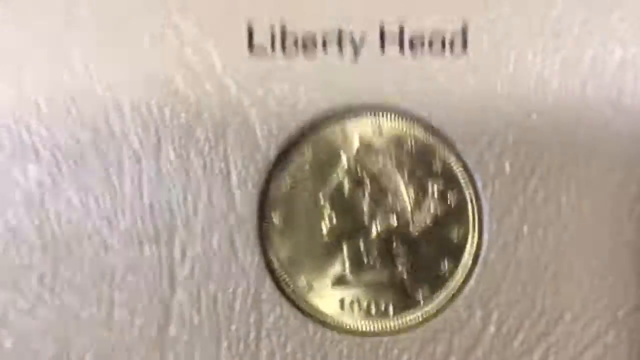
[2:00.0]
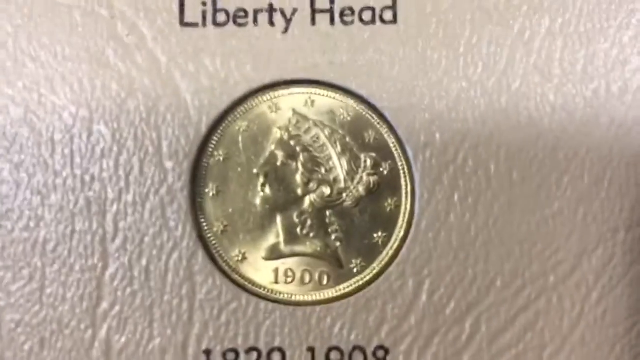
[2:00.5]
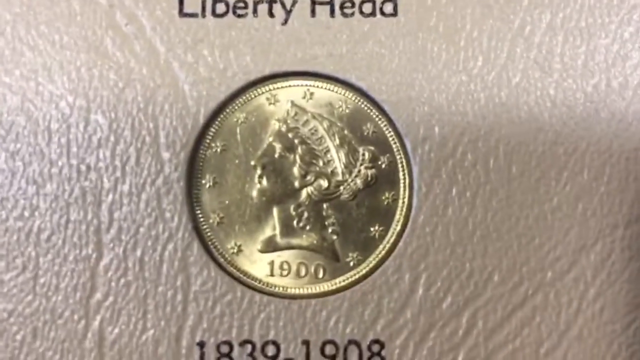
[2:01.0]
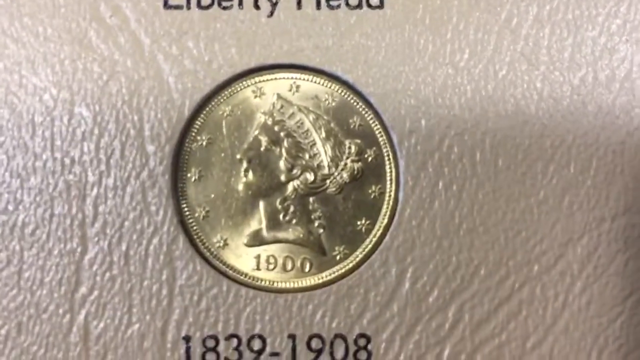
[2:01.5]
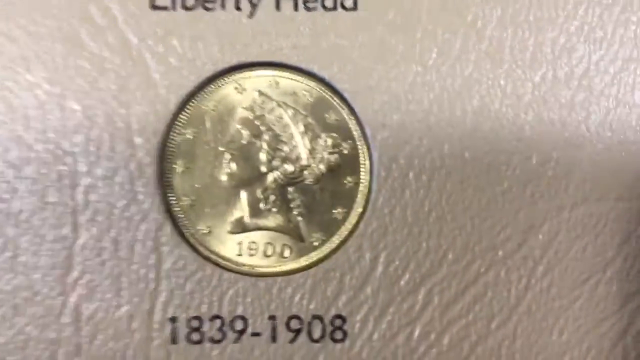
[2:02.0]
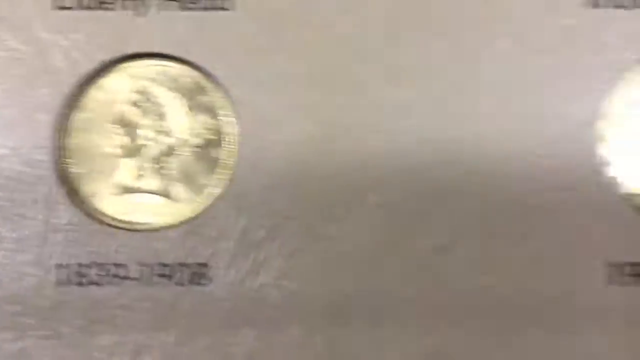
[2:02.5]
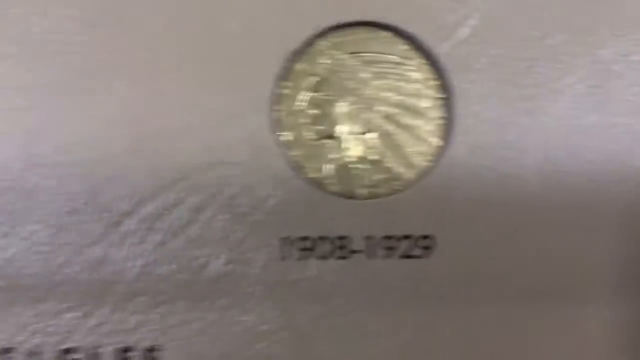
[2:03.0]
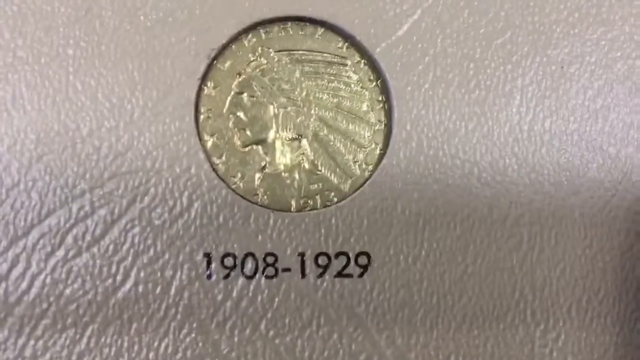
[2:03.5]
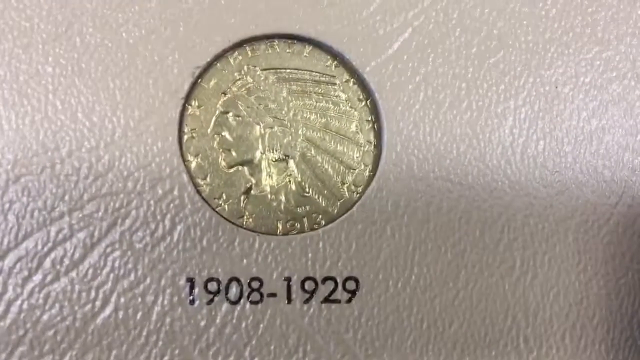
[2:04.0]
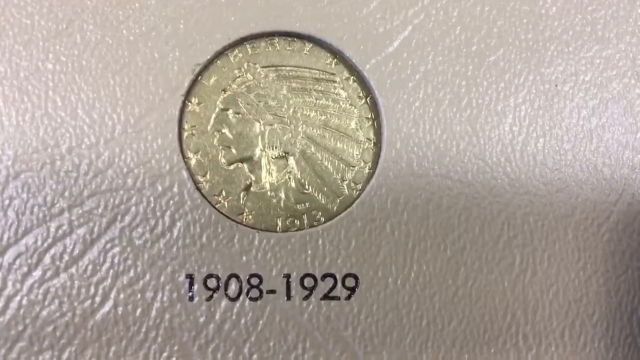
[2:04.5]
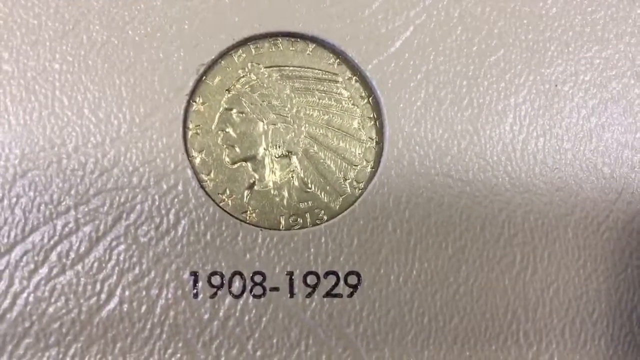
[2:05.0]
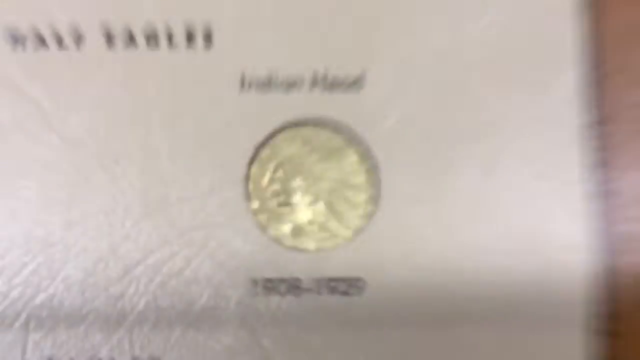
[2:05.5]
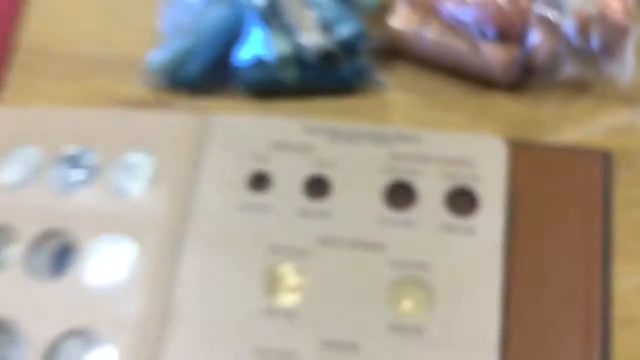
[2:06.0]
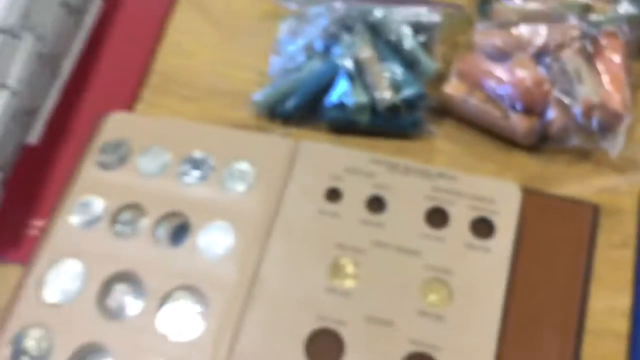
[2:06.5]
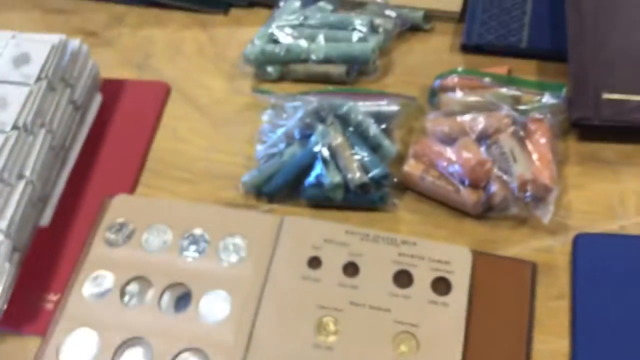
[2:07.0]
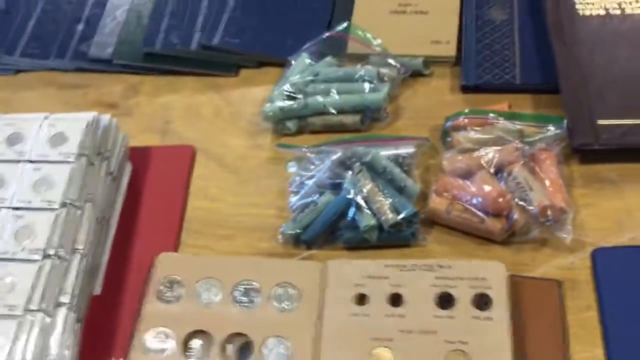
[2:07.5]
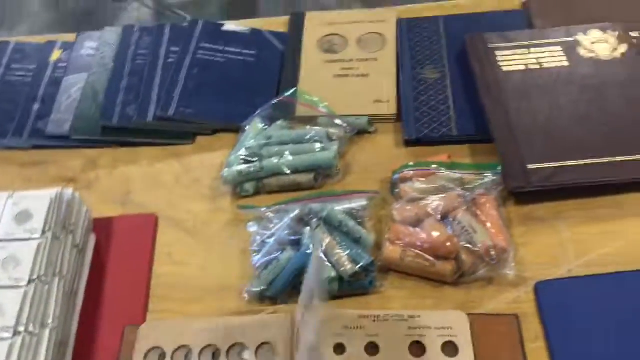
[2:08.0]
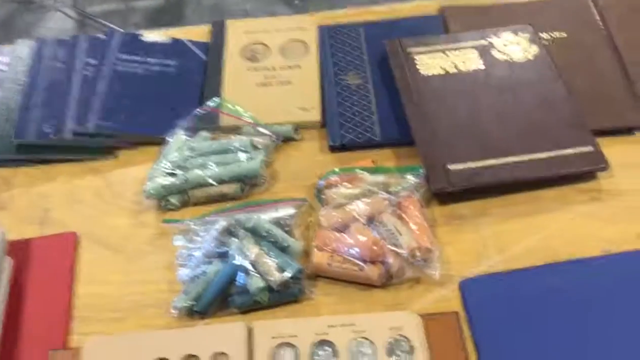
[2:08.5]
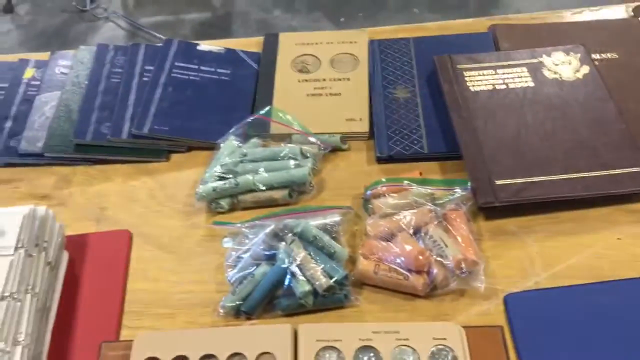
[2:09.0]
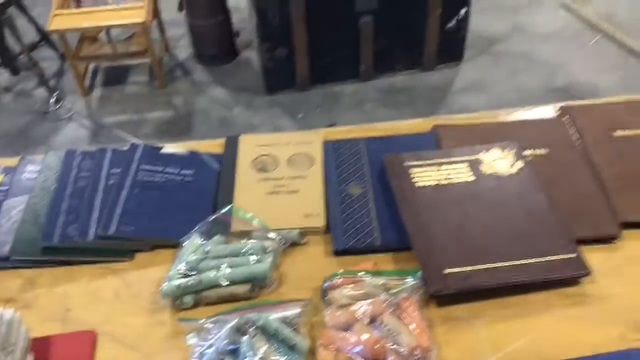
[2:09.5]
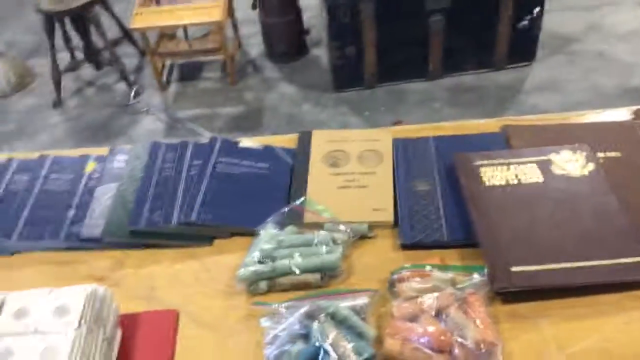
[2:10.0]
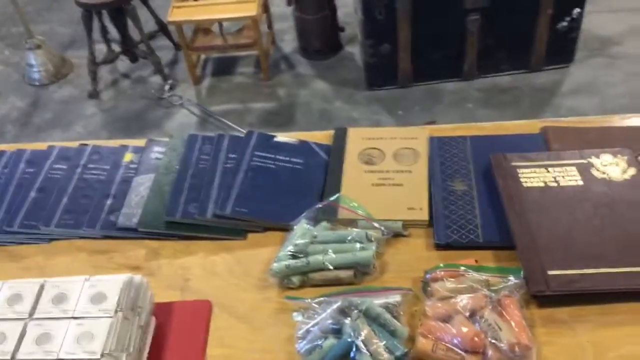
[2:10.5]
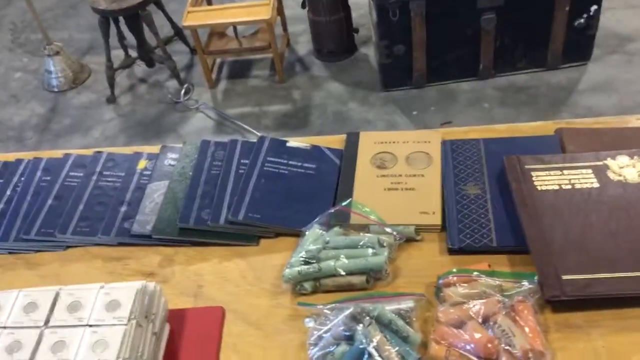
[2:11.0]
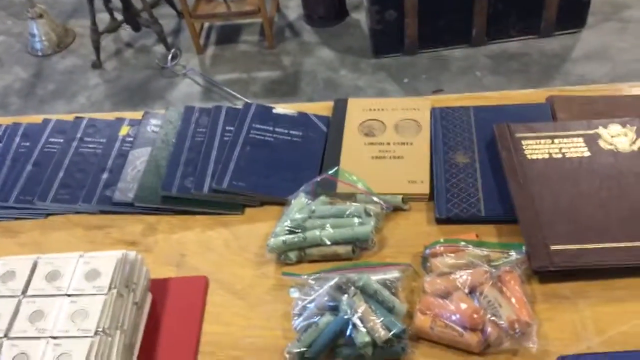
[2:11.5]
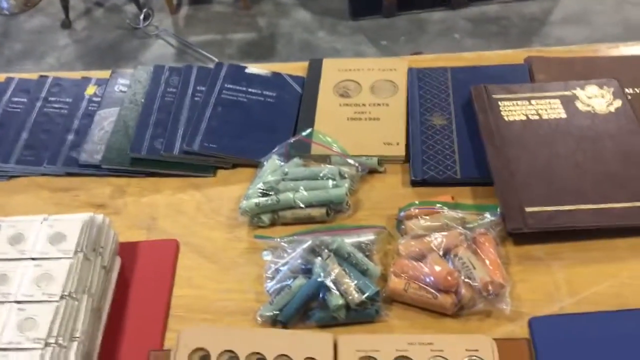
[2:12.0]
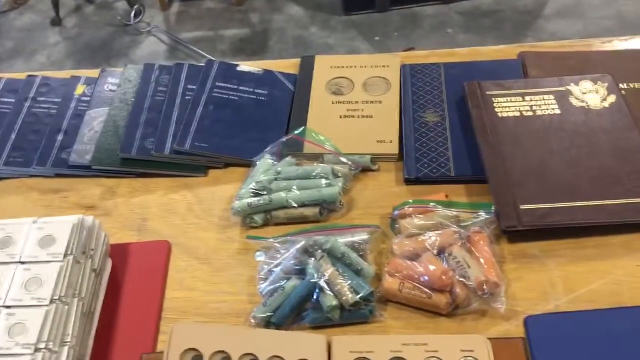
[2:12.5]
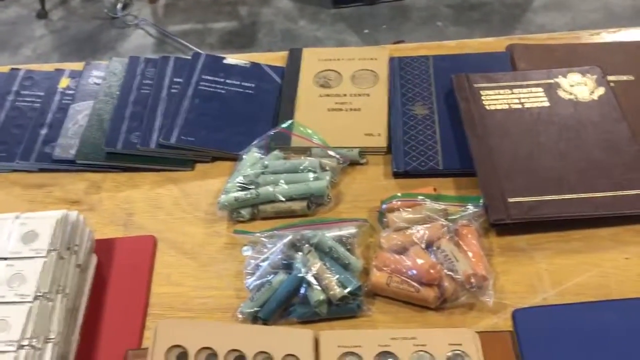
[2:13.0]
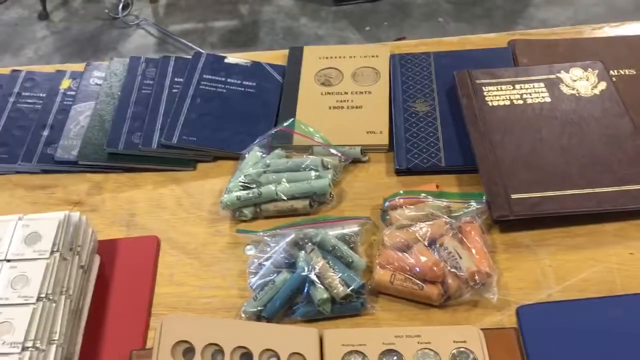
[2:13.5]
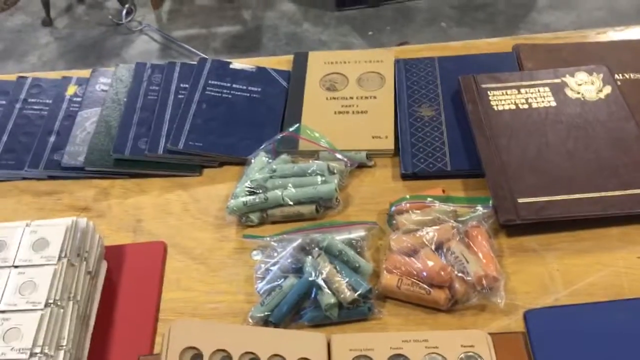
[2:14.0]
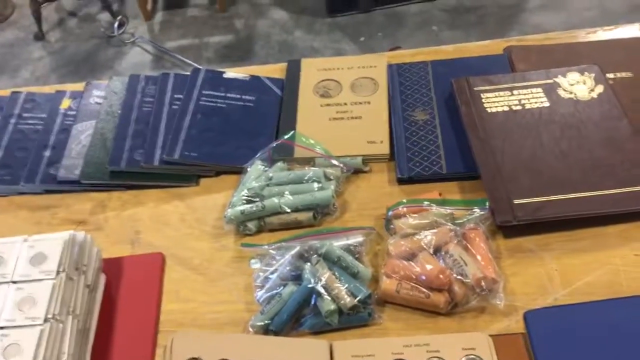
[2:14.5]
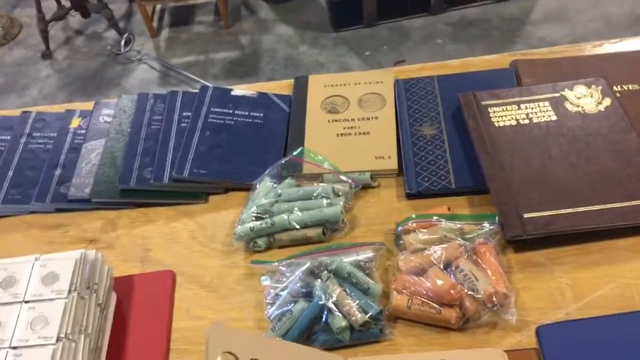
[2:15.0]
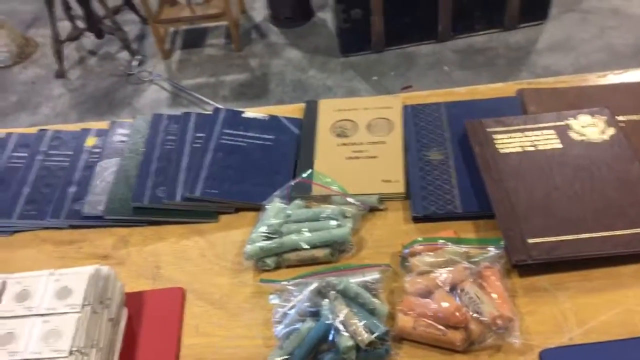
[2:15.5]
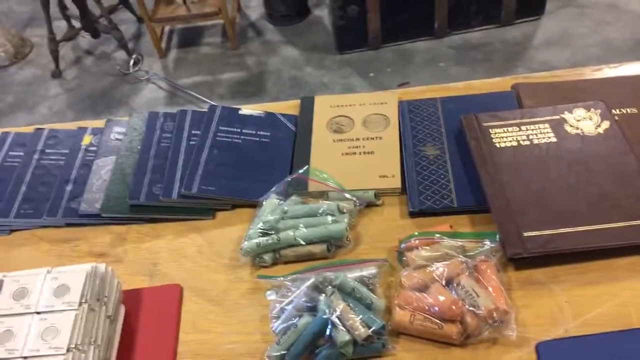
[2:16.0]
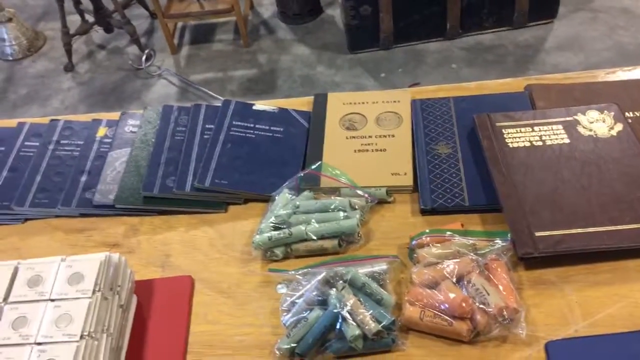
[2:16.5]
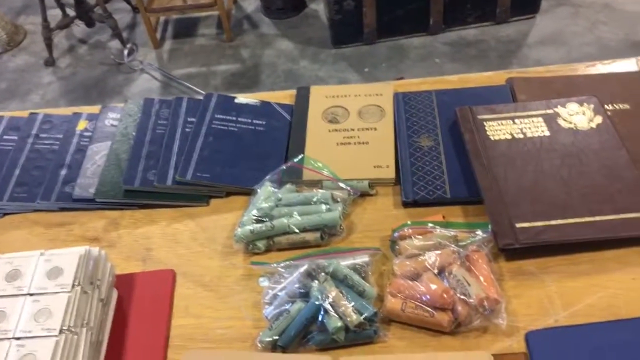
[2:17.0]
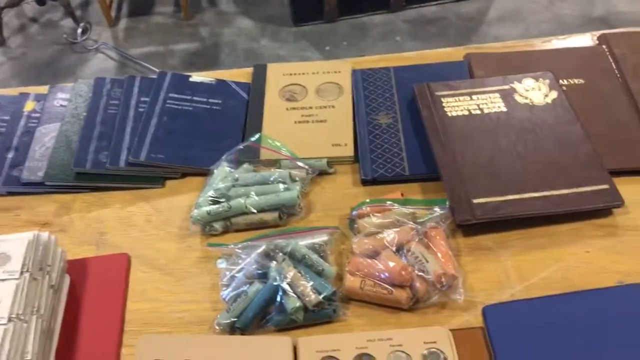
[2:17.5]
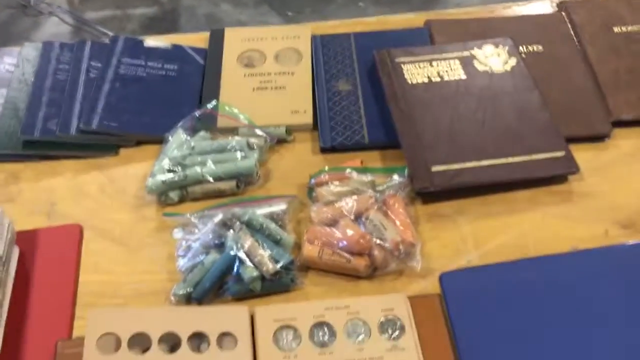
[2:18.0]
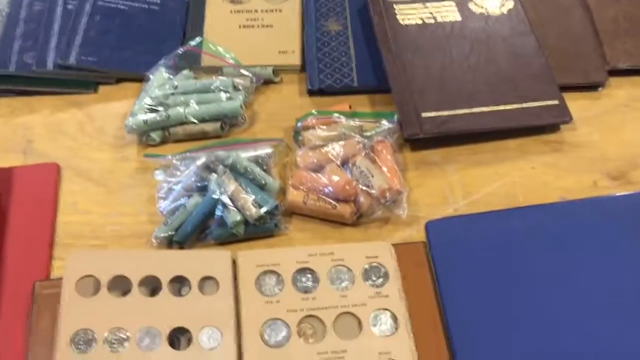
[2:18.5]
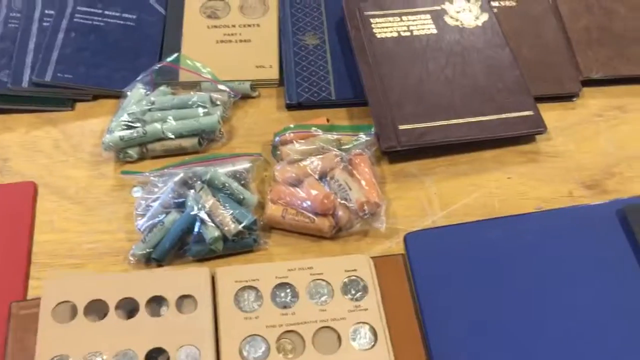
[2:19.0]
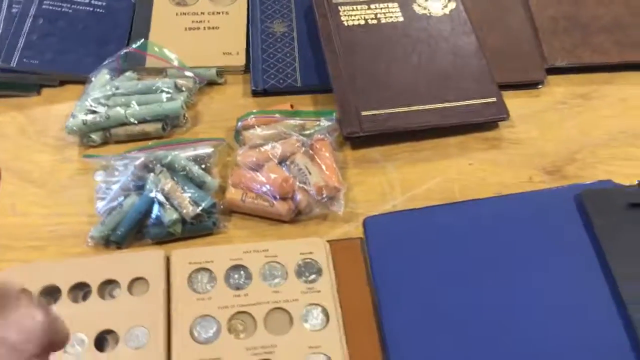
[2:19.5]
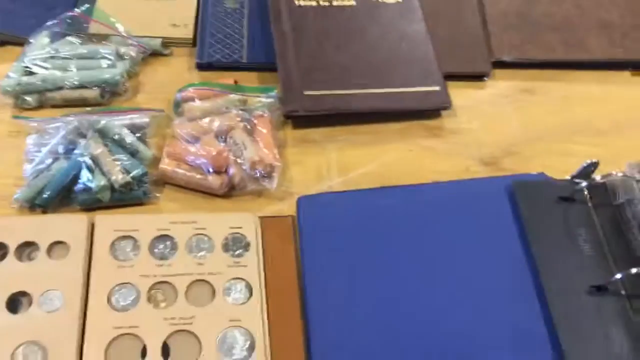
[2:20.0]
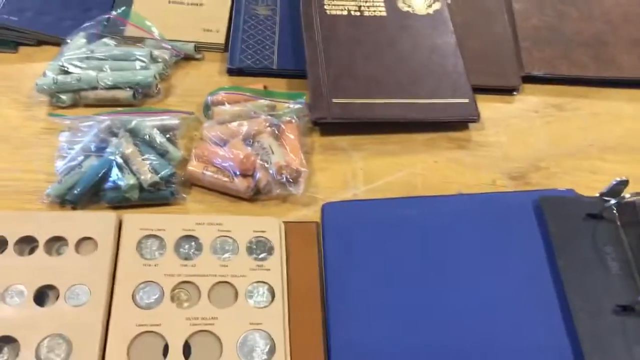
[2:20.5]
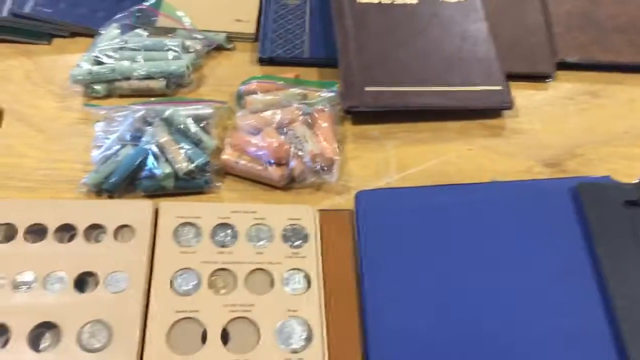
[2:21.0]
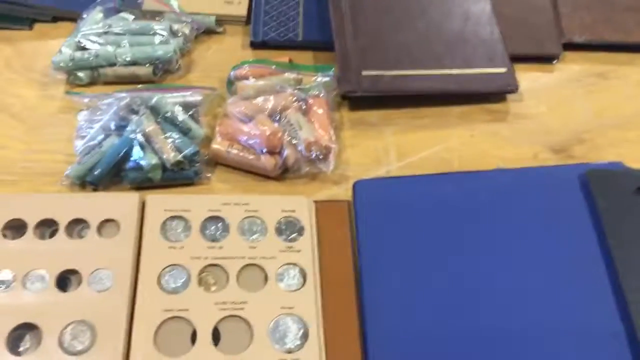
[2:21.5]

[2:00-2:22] A coin shows the design of a person. It is a silver coin with the year 1900, and the name written on top of it reads "Livery Head"; each coin appears to have a name for its head design. The coins show different years. Another coin reads "1908 to 1921", and its design seems to be a man with long hair, or with something put on the hair. This coin looks silver or gold. The files are on top of the brown table, some closed and some open; the open ones are blue, brown and maroon. Someone keeps flipping the pages of coins. The coins are separated into squares, each placed in a round hole that it fits well.